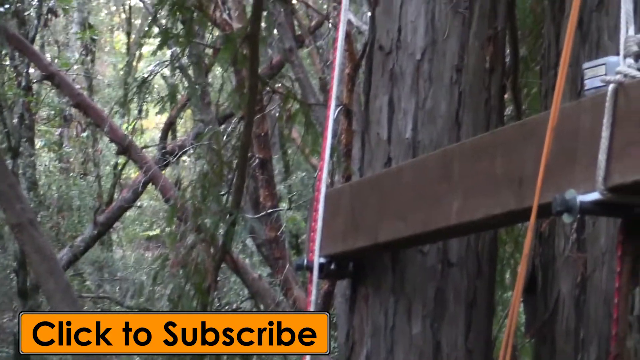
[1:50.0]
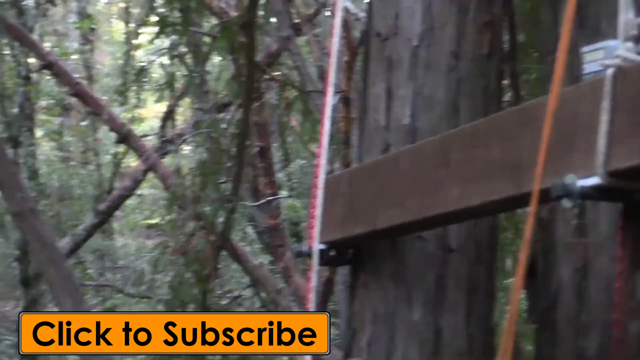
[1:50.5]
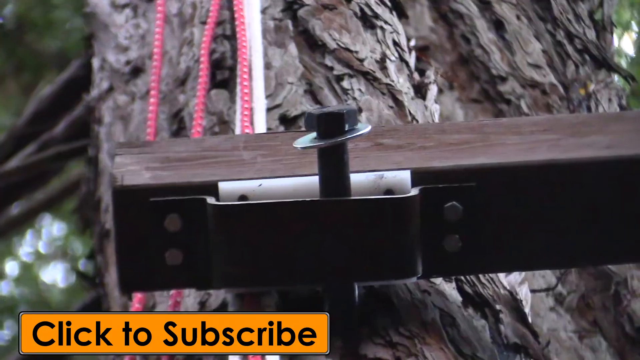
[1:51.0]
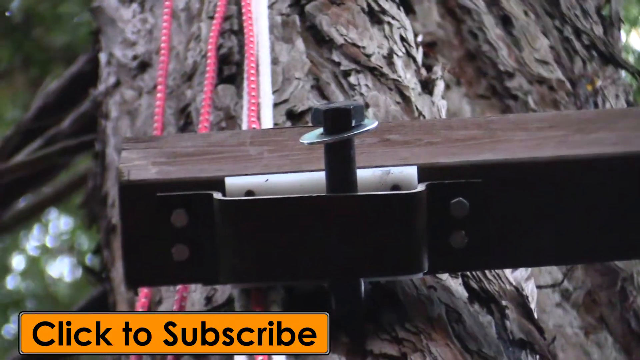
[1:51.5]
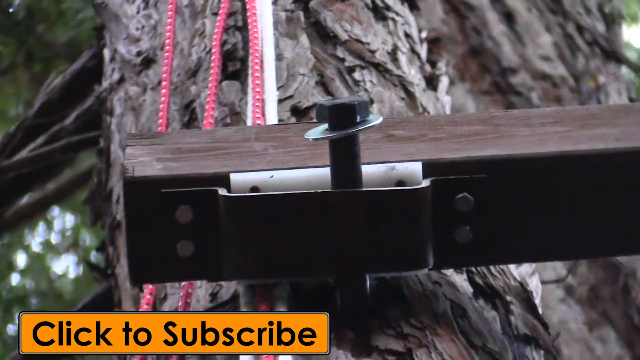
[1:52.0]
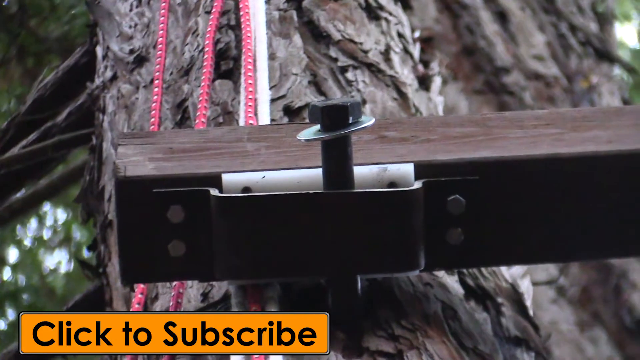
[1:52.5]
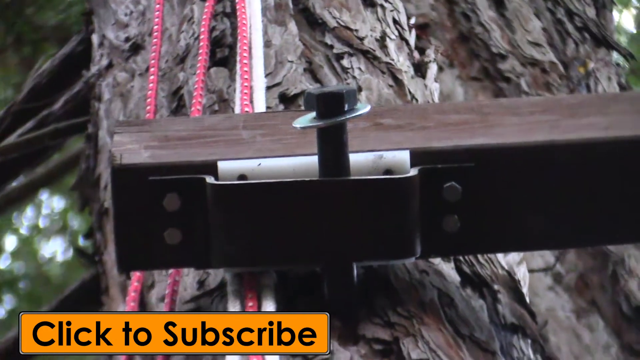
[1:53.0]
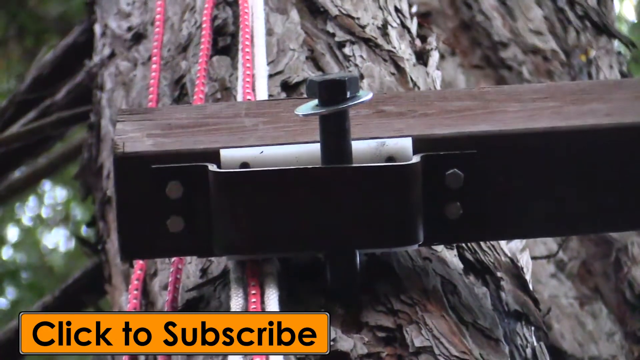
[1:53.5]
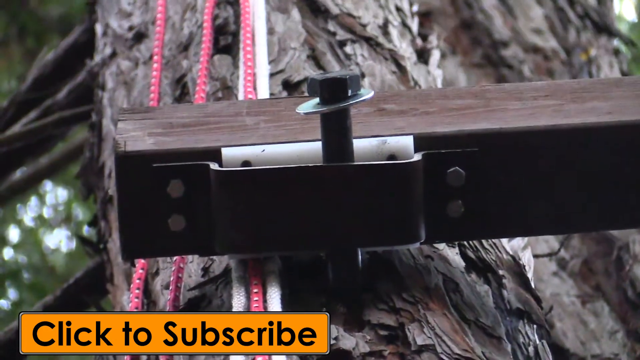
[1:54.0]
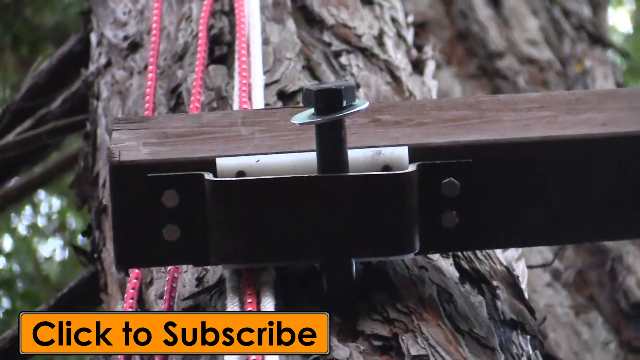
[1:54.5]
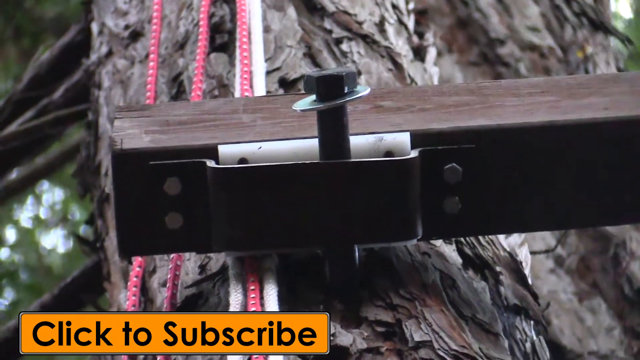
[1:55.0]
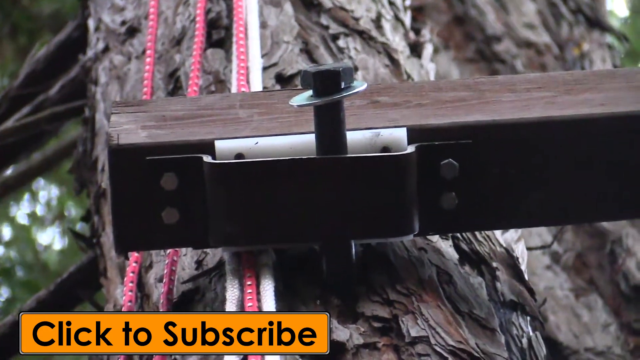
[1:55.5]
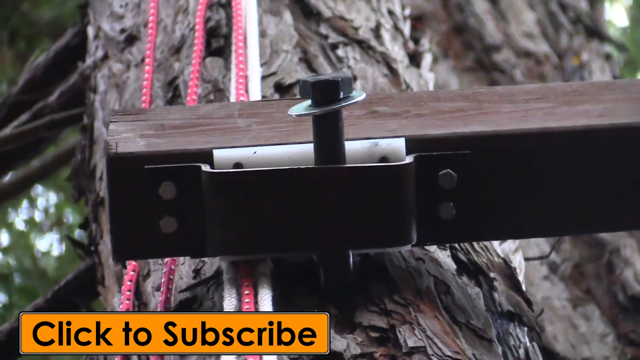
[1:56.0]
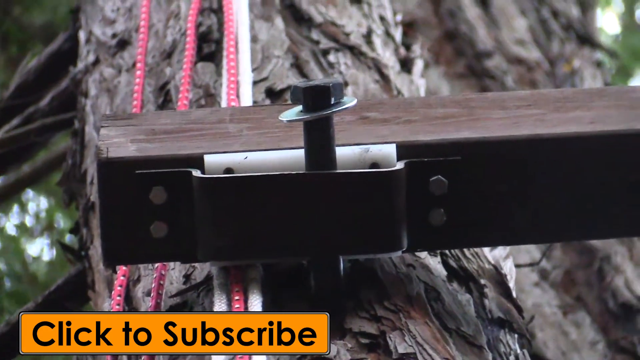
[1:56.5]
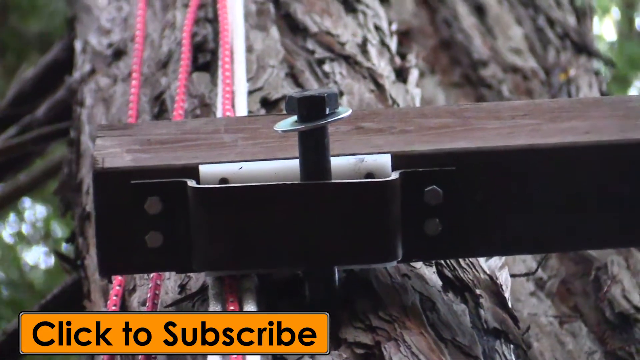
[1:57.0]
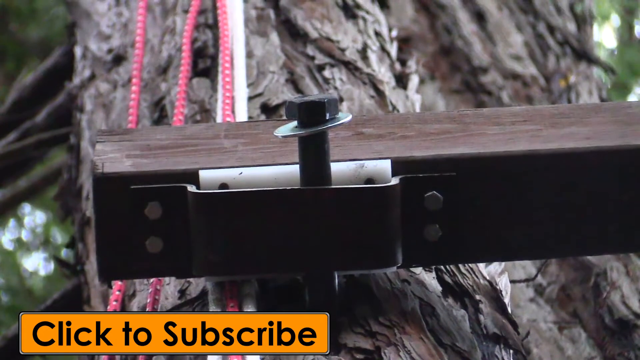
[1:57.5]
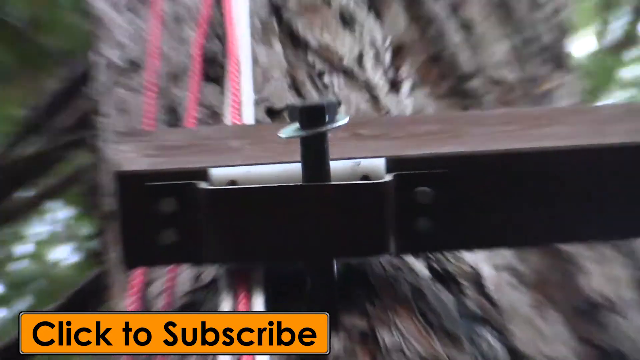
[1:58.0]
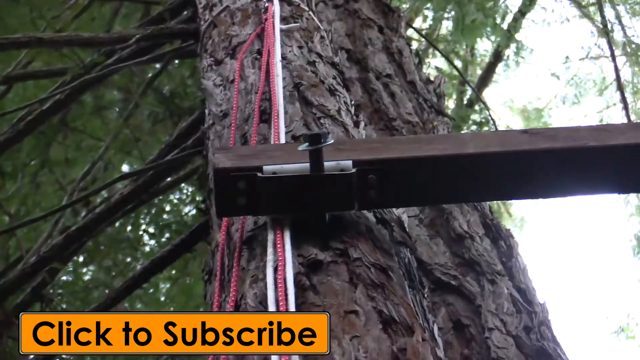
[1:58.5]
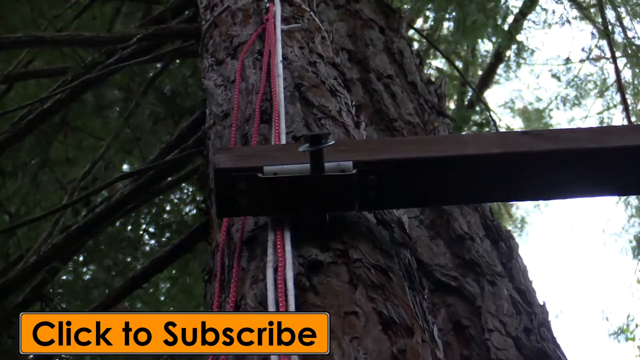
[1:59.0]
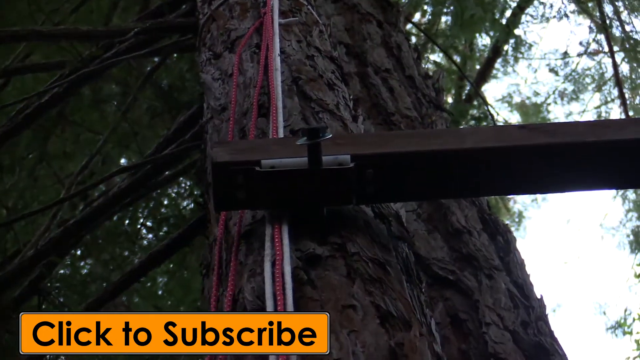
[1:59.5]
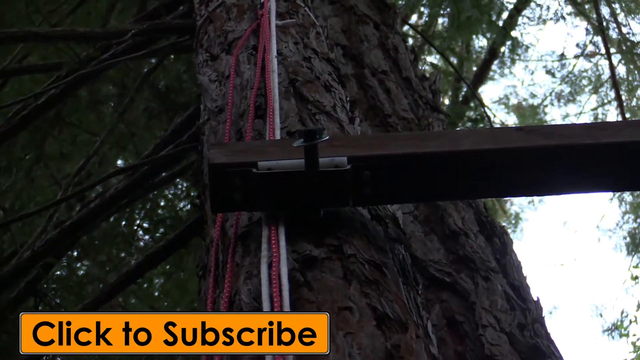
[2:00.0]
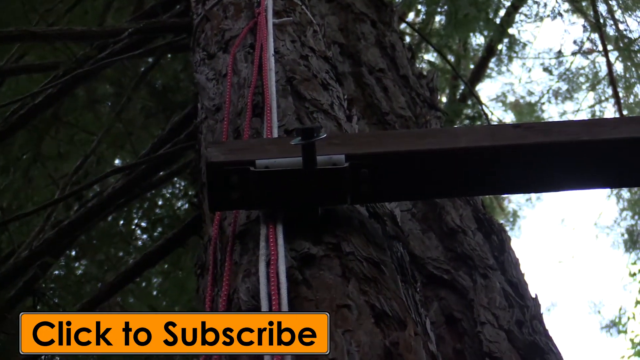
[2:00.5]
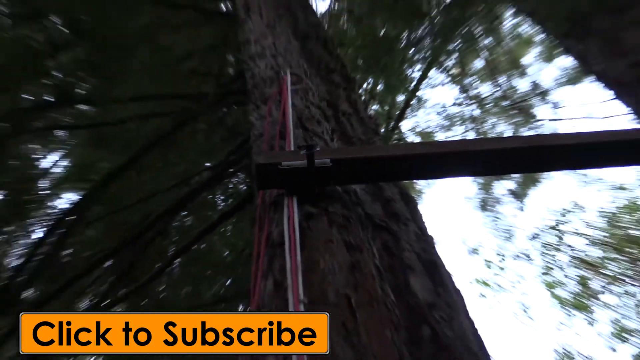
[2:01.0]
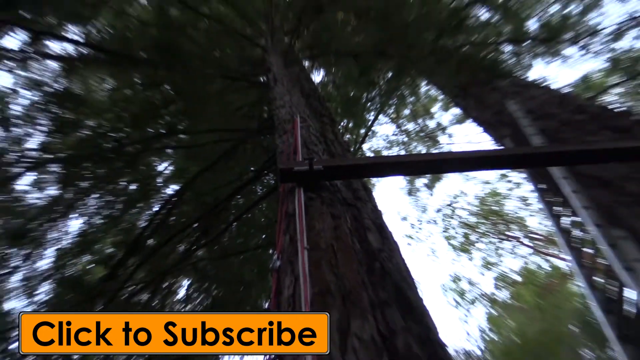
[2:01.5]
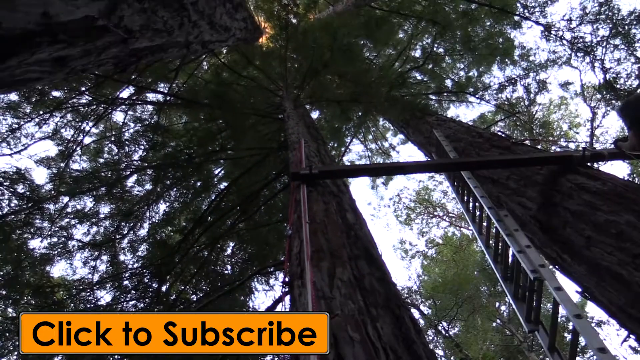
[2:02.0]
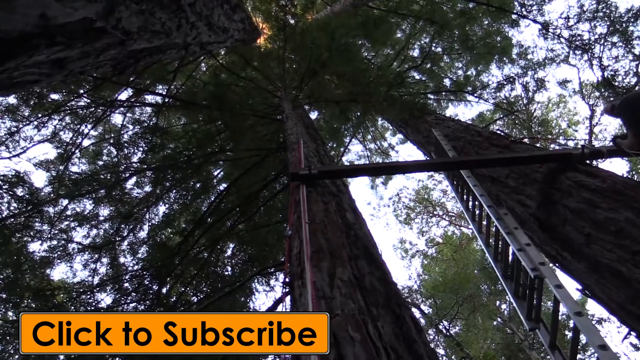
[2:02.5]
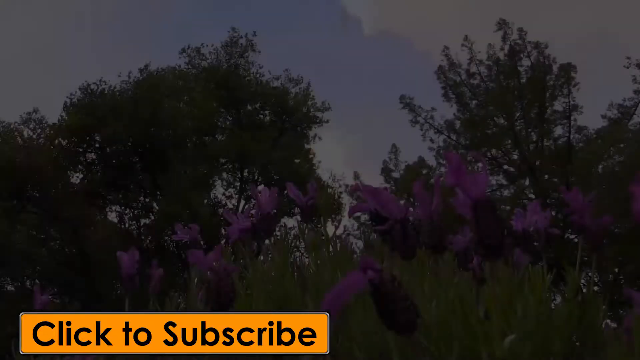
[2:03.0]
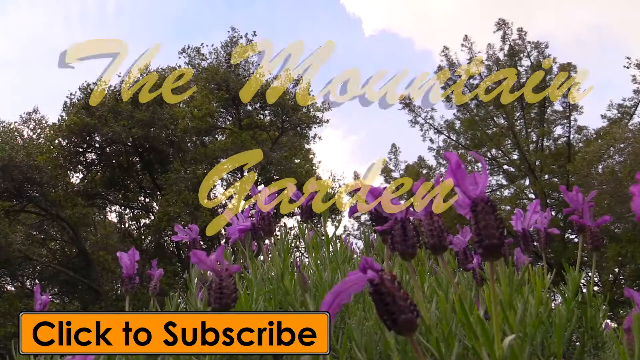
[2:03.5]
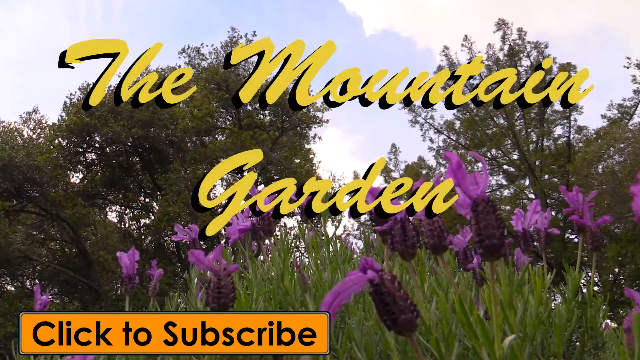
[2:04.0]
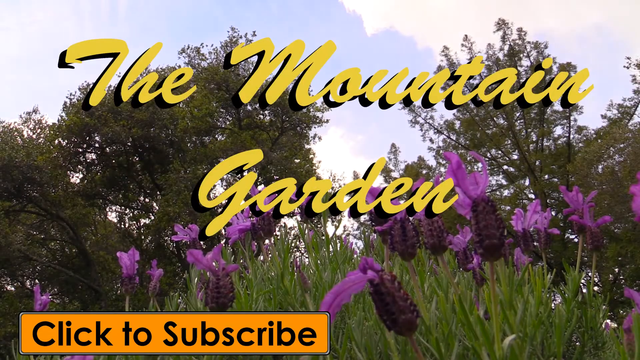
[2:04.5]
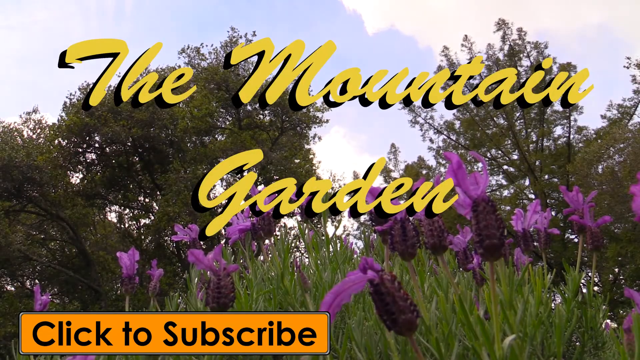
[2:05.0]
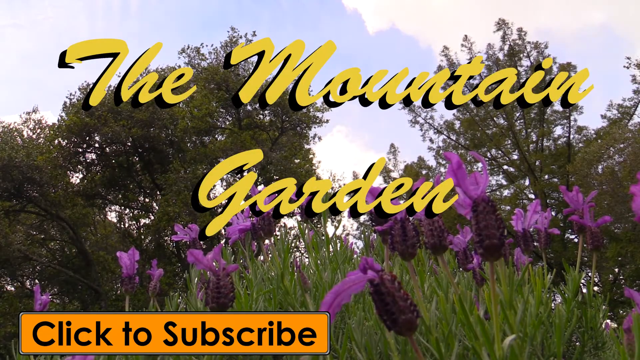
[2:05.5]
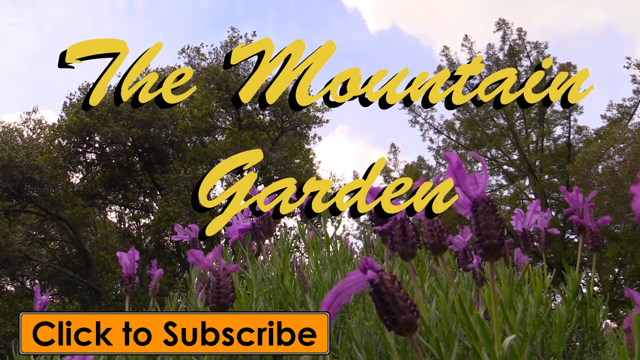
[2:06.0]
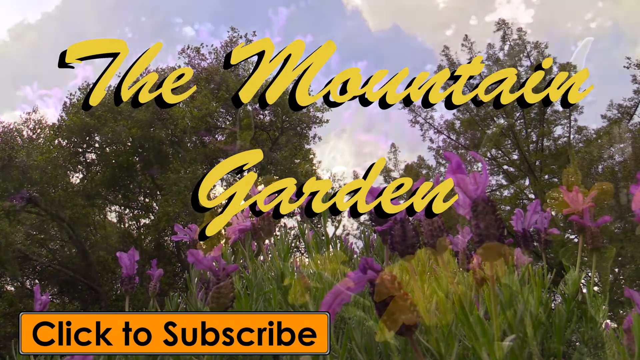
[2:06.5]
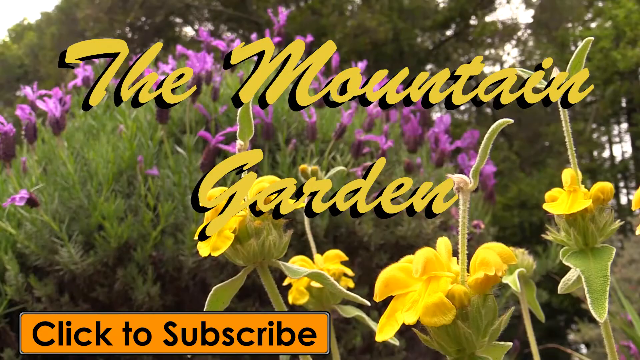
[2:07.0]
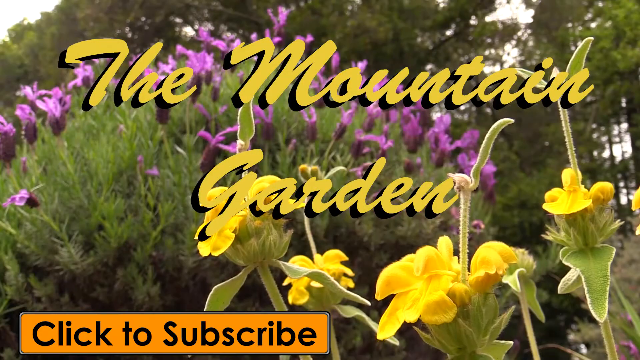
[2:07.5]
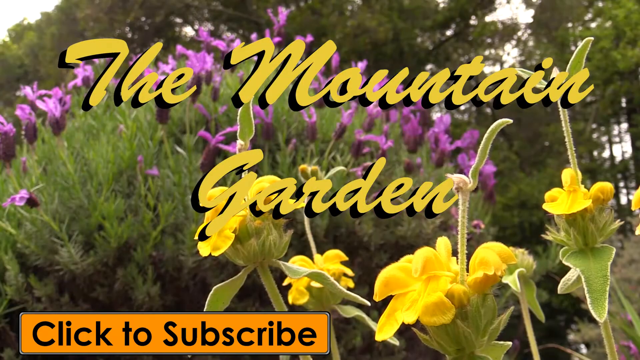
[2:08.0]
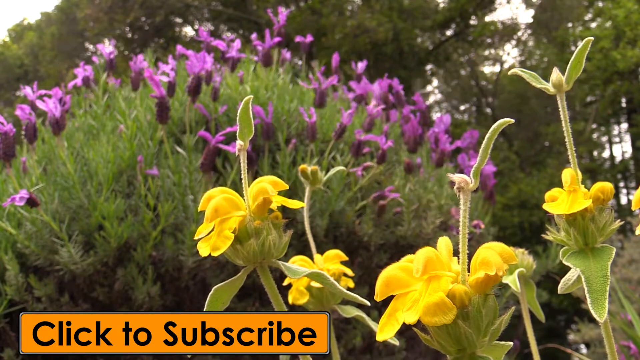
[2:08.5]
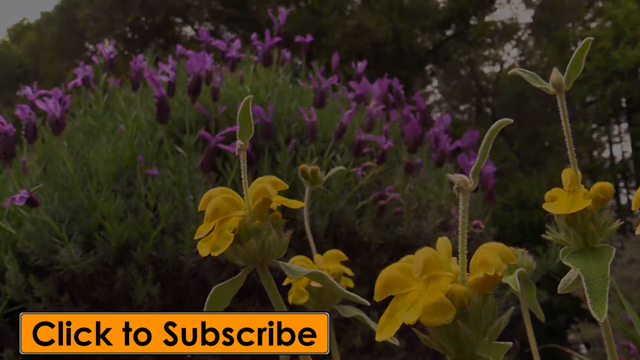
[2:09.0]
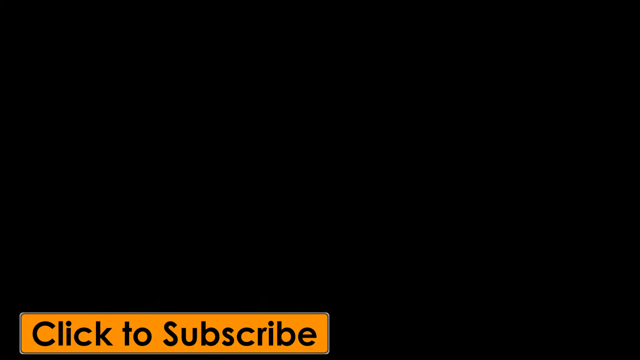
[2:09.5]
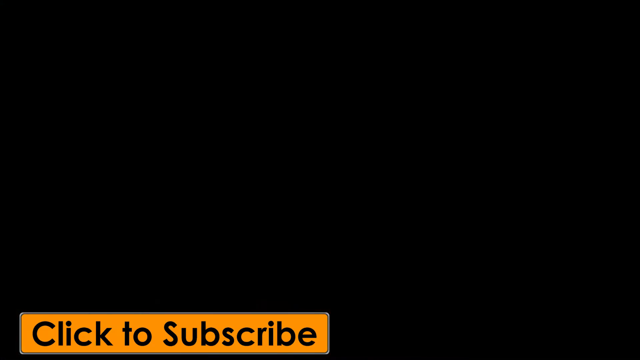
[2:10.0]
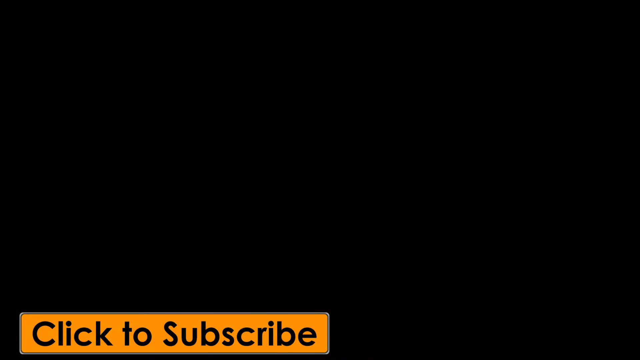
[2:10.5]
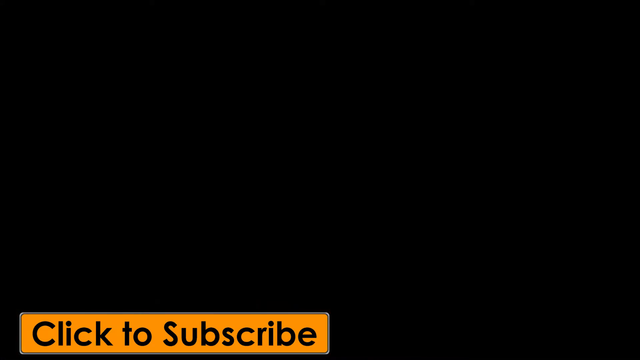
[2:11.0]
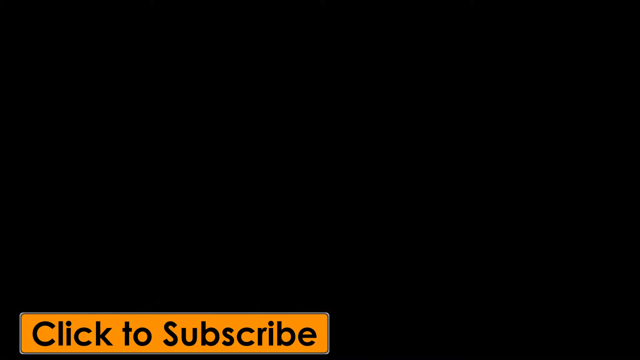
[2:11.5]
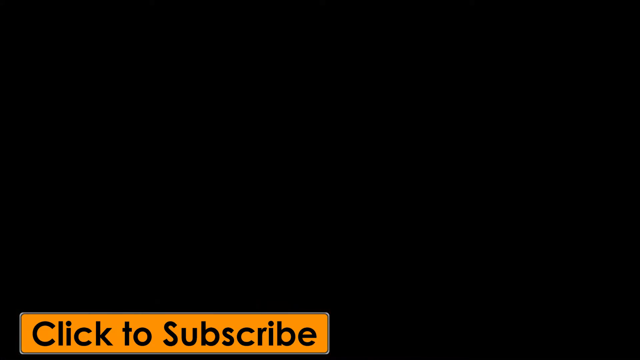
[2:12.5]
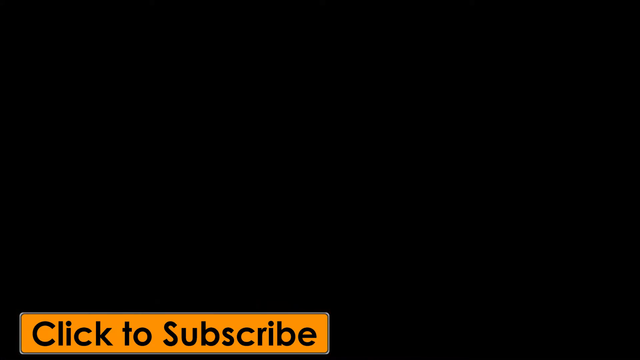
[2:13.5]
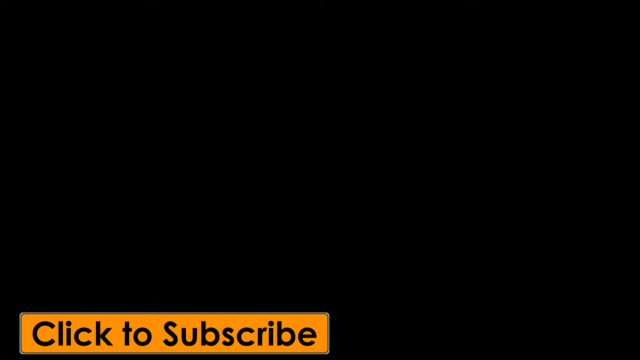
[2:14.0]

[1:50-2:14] A close-up shows the beam, which appears to be brown metal, and the bracket attaching it to the tree. Behind the beam are the ropes, three red and two white, that were used to secure the beam and the men to the tree to keep them from falling. As the view zooms out, it looks up into the tree, showing the beam attached to it. To the left, a silver ladder is laying against another tree. In the bottom right of the screen, an orange bar appears with black lettering reading "click to subscribe." The scene then changes to a field of purple and white flowers with the dense forest in the background, and yellow lettering reads "The Mountain Garden." Next comes a close-up of purple and yellow flowers, with "the mountain garden" still written on the screen in yellow.